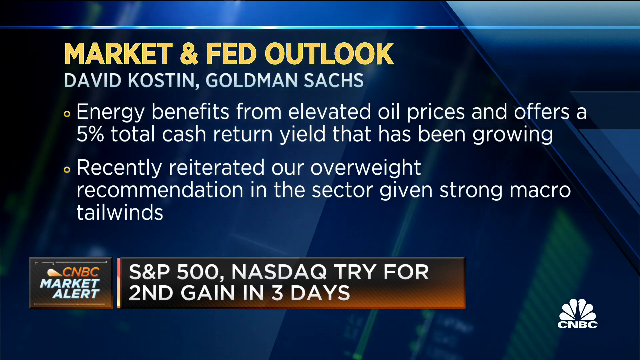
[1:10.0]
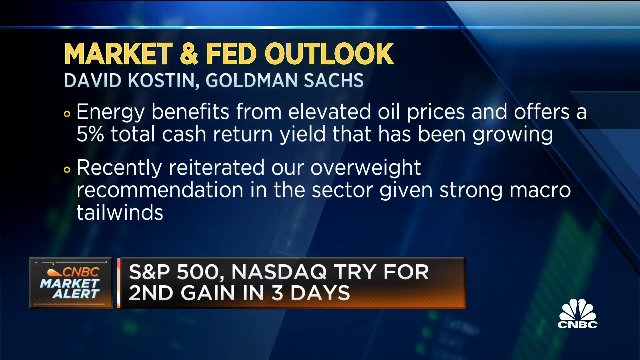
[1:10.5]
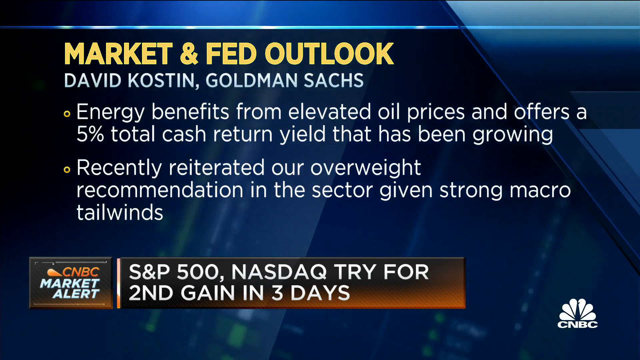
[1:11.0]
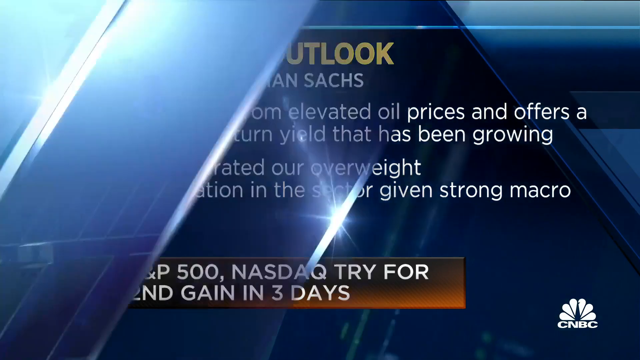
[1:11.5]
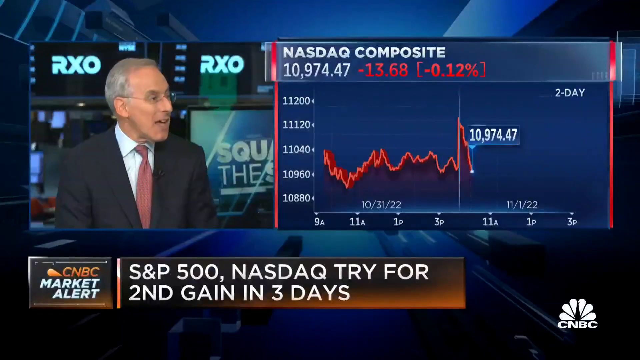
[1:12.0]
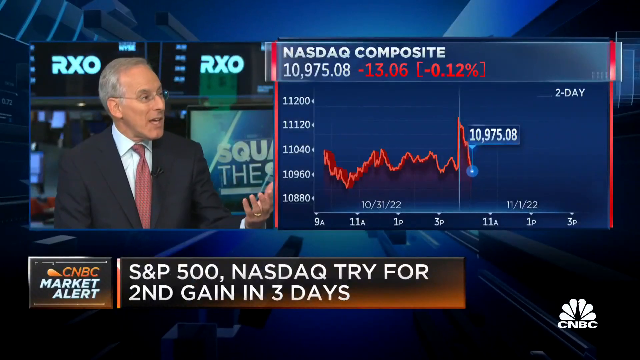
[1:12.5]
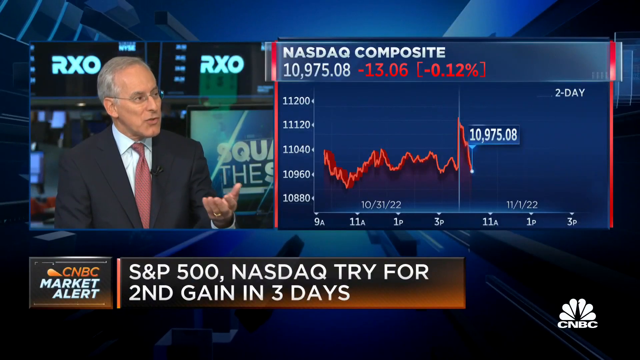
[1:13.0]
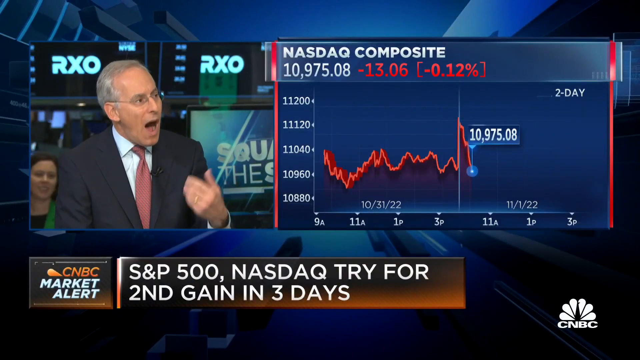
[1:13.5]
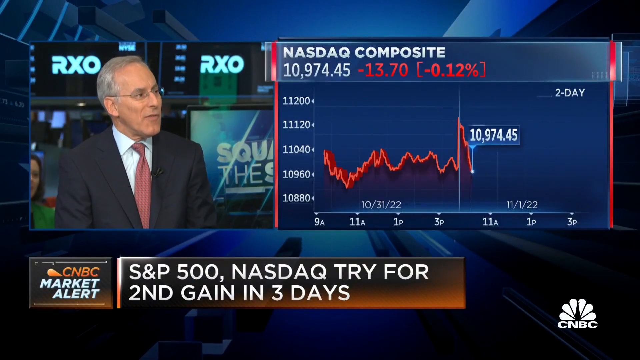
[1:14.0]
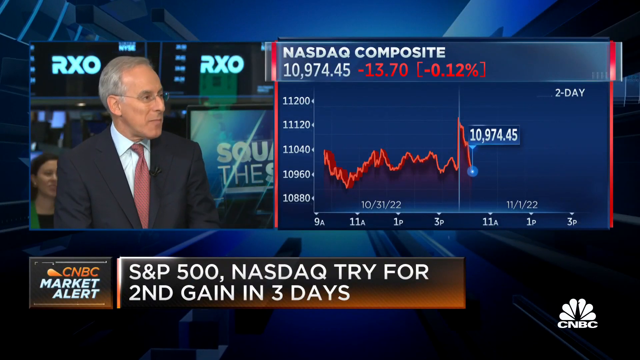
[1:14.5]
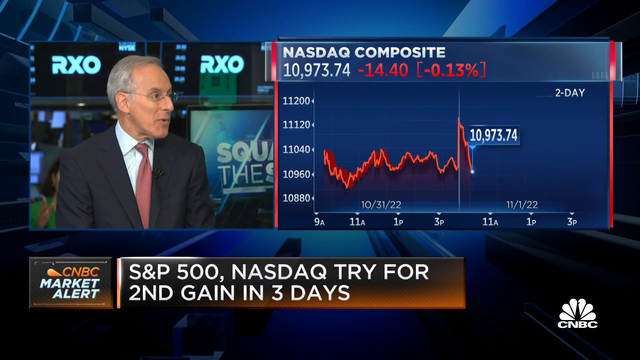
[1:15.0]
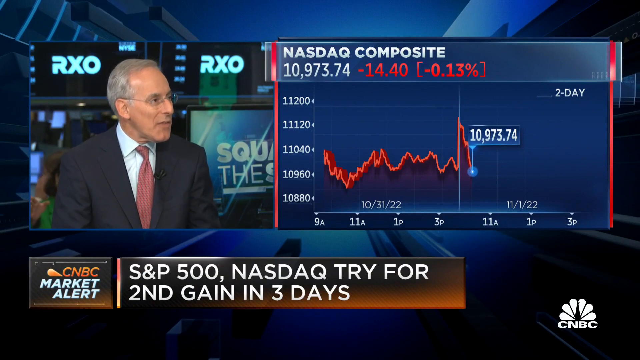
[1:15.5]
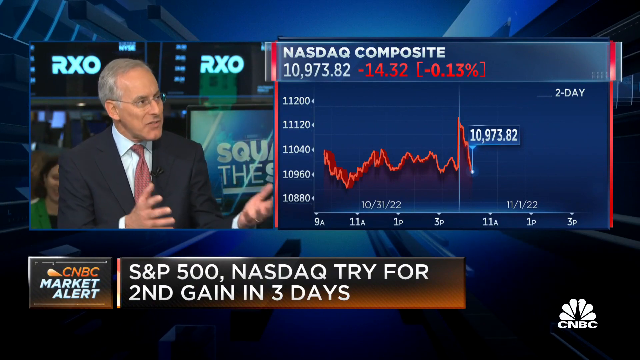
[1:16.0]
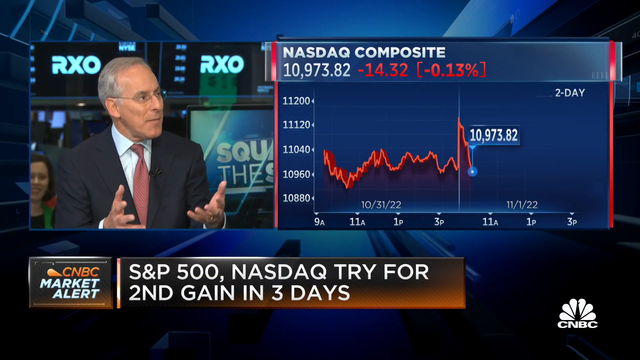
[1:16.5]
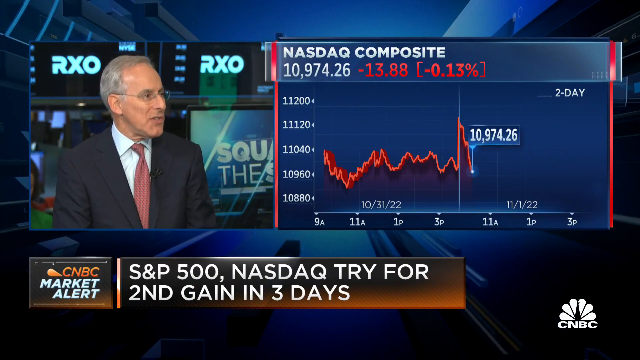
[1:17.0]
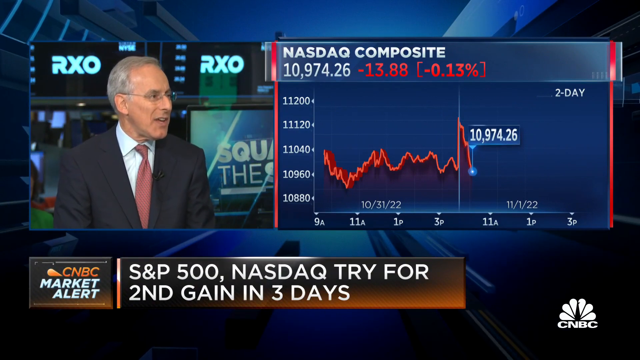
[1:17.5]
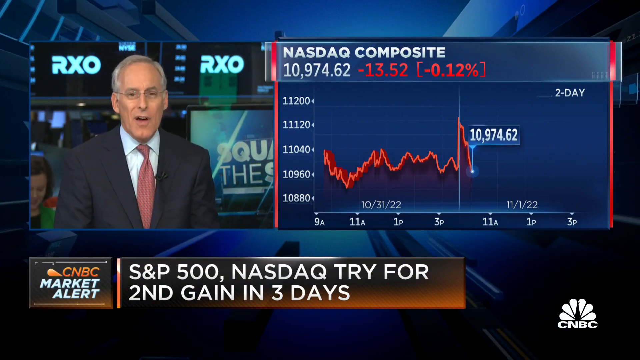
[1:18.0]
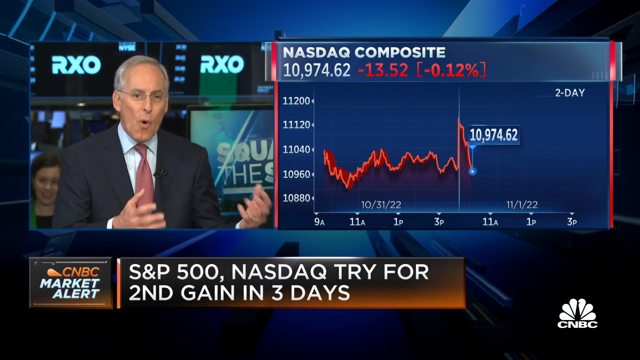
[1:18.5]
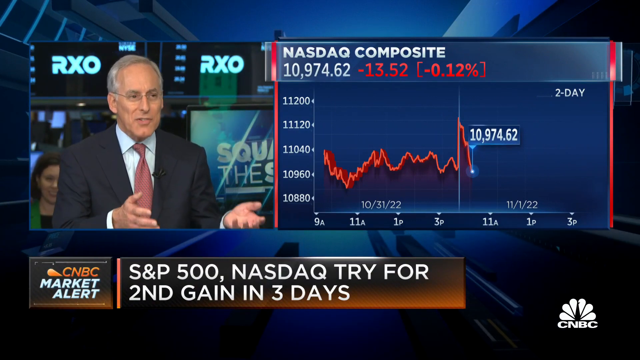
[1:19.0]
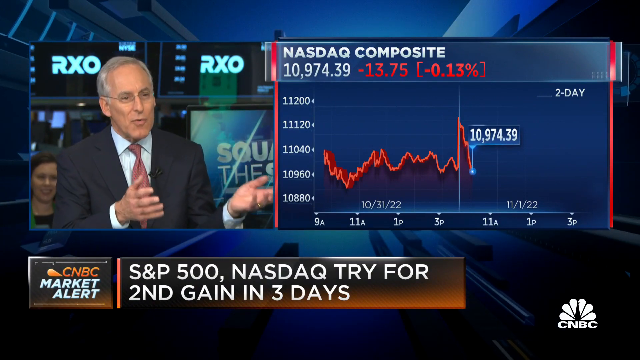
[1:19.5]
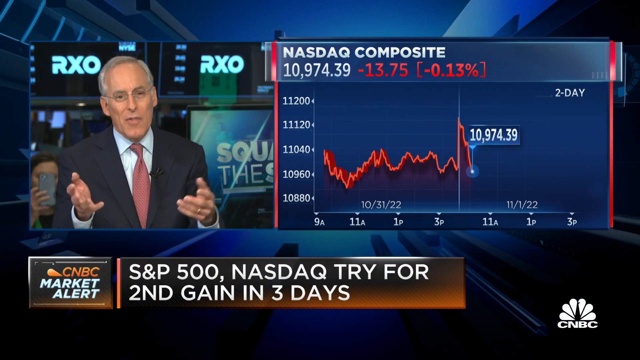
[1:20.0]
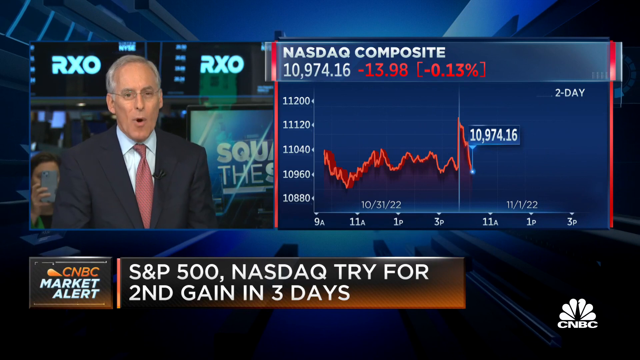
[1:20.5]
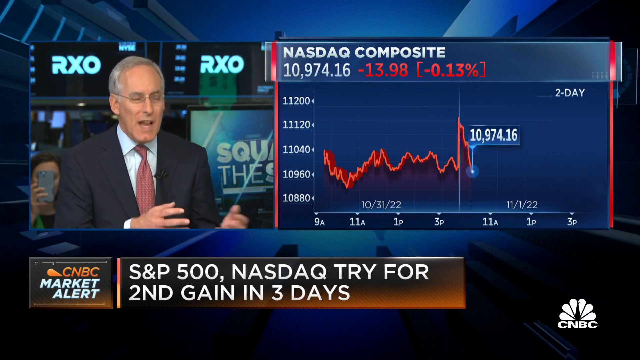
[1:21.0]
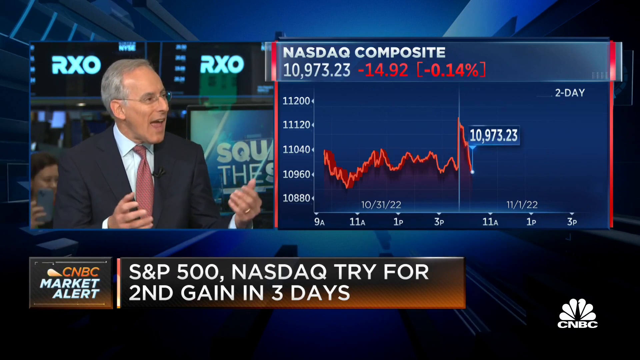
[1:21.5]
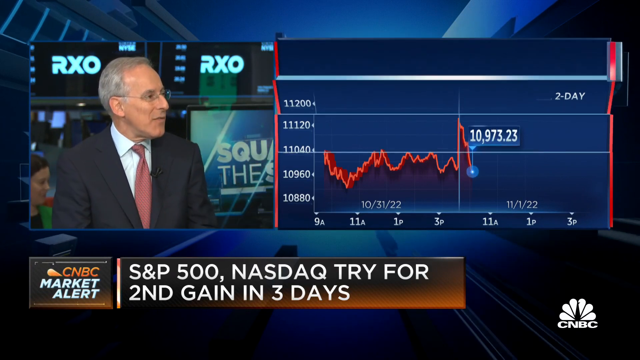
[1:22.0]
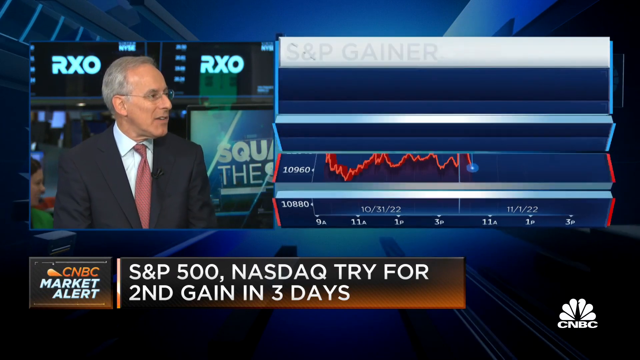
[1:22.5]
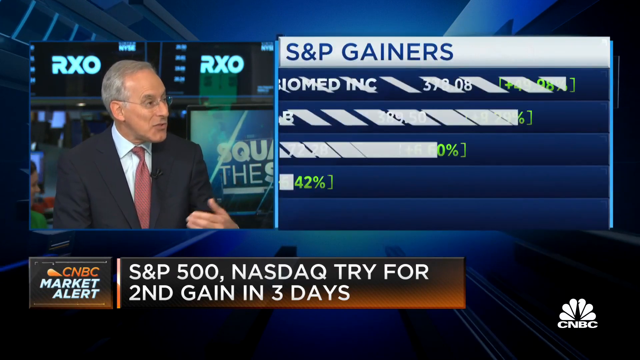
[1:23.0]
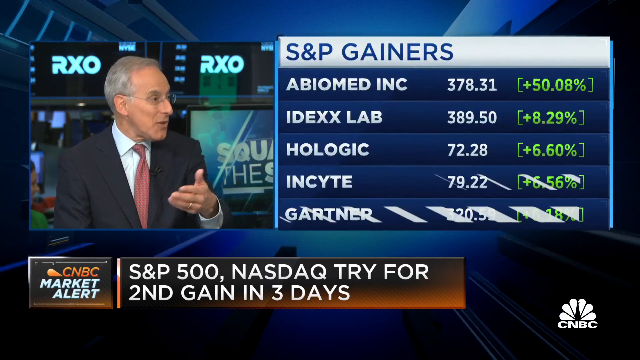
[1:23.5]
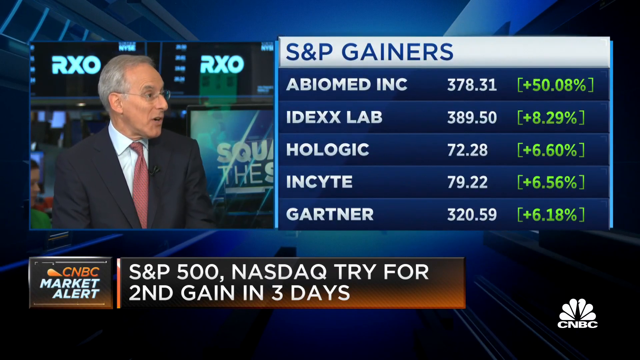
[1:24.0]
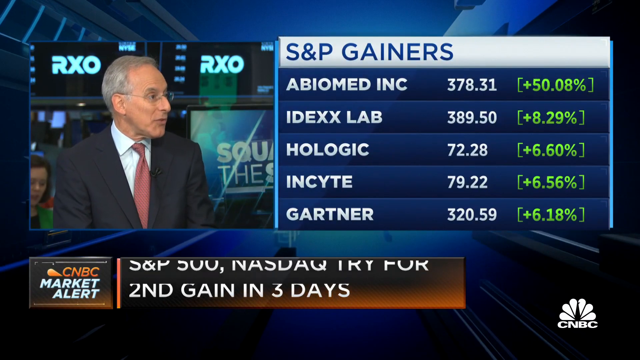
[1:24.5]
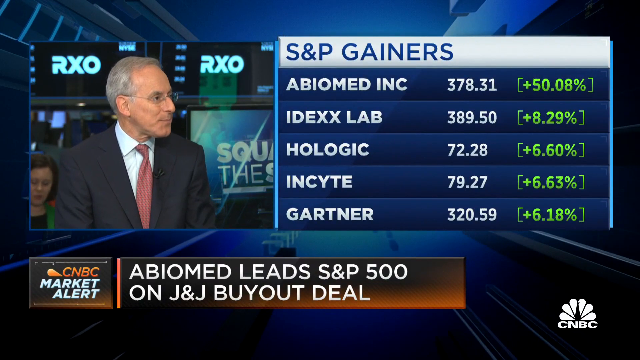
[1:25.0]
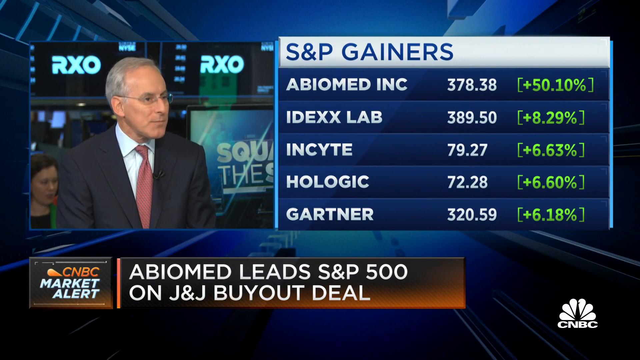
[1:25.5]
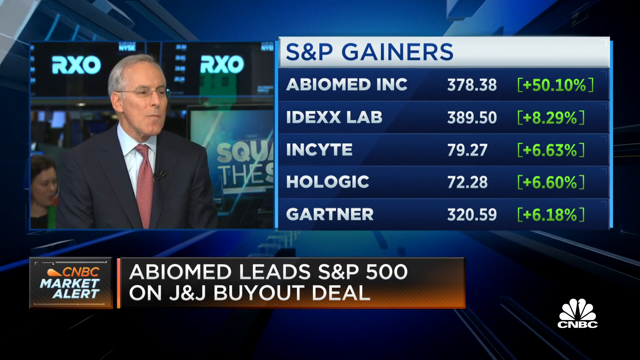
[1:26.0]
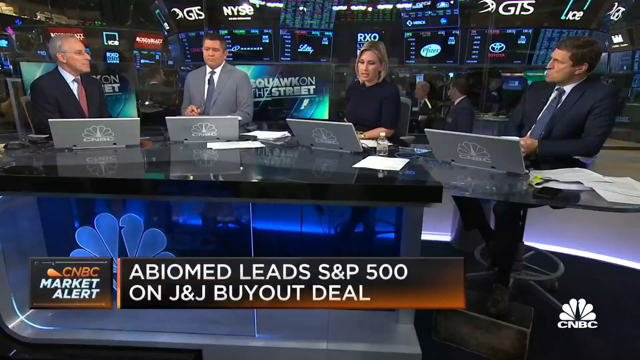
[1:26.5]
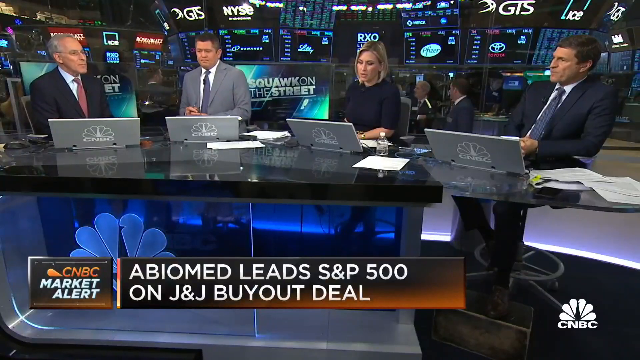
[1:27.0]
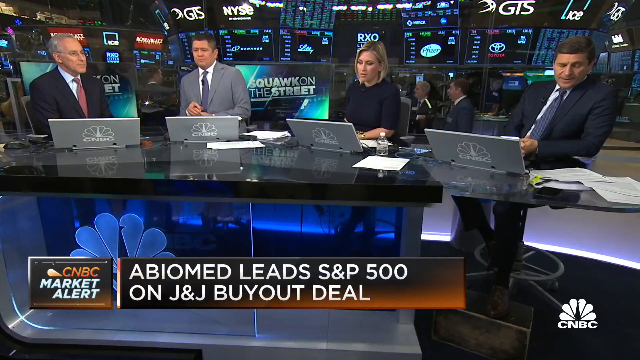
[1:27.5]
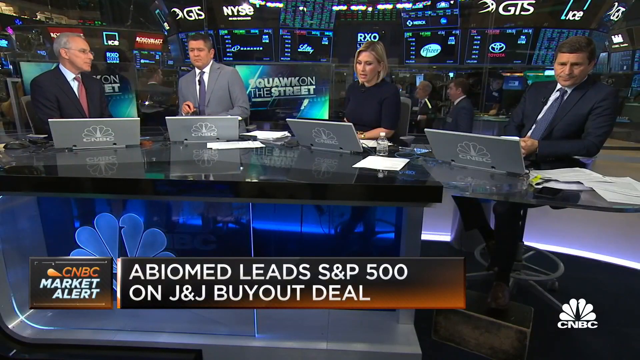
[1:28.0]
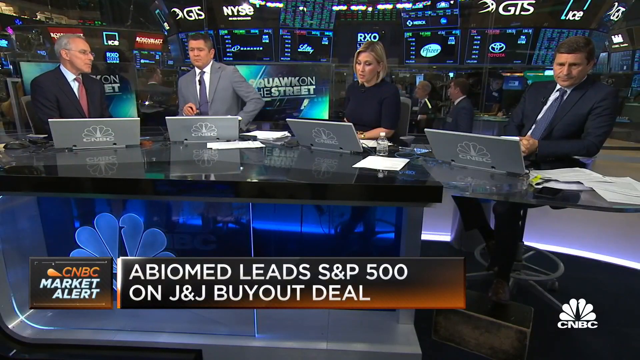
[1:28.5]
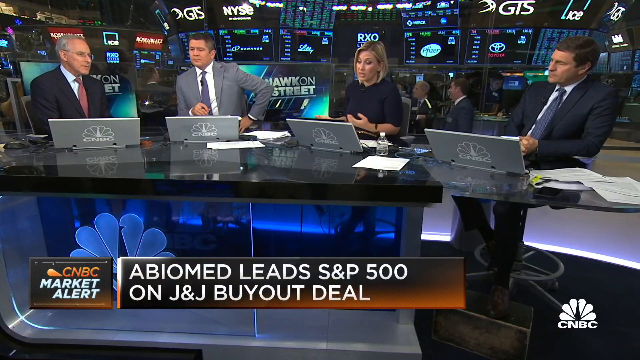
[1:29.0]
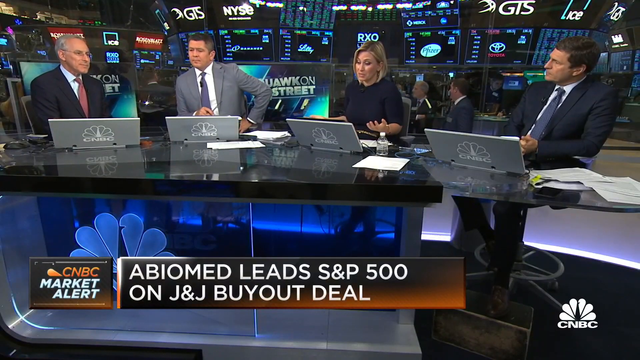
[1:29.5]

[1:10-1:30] The S&P 500 and NASDAQ are trying for a second gain in three days. An S&P Gainers list shows ABIOMED Inc up over 50 percent, Index Lab over 8 percent, Hologic up over 6 percent, Insight over 6 percent and Gartner over 6 percent. A headline ends "leads S&P 500 on J&J buyout deal". The four people on the panel discuss it, and the woman is the last one to talk. A woman in the background holds her phone up, videotaping or taking a picture of some of the people on the panel.